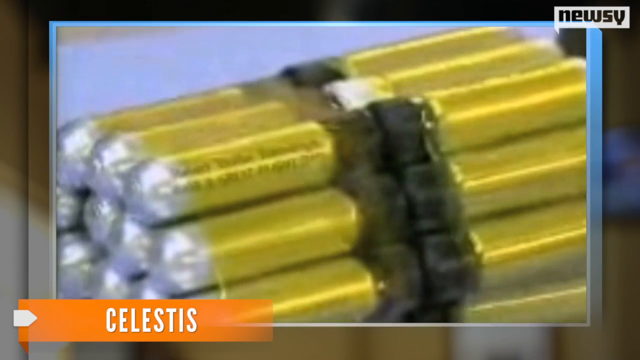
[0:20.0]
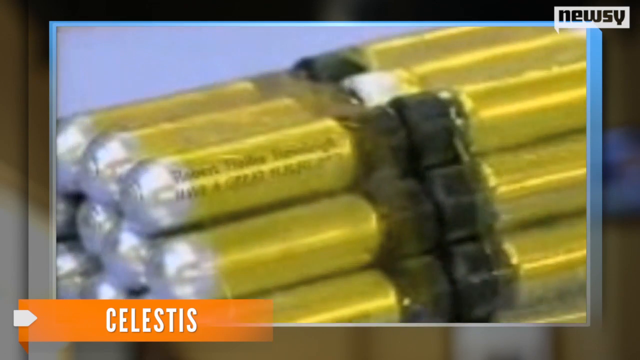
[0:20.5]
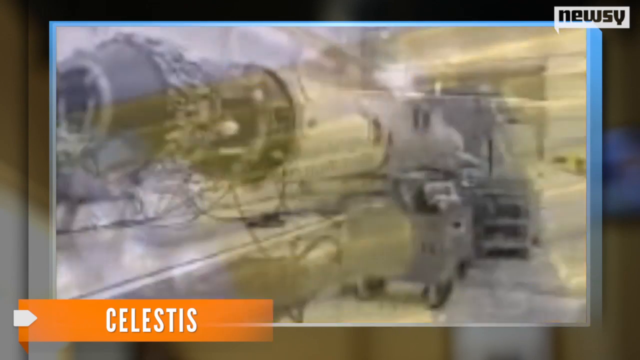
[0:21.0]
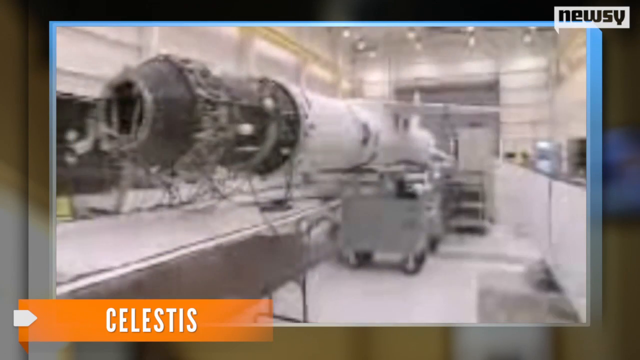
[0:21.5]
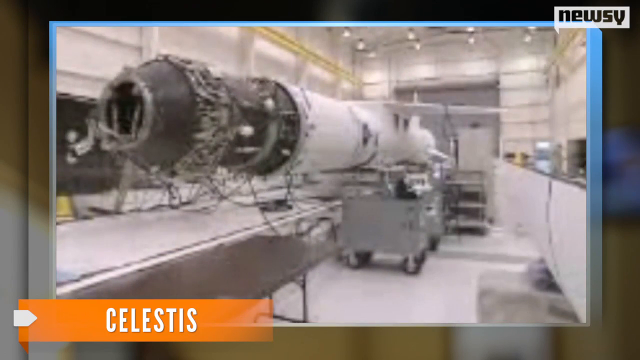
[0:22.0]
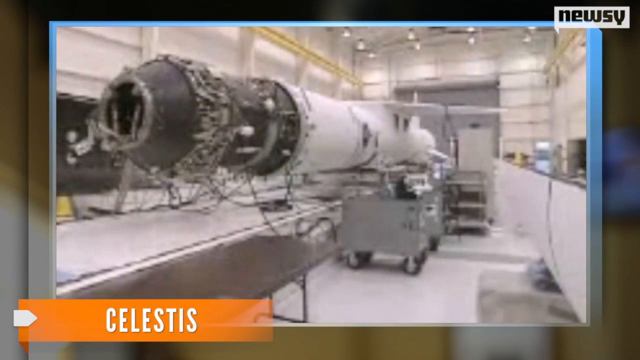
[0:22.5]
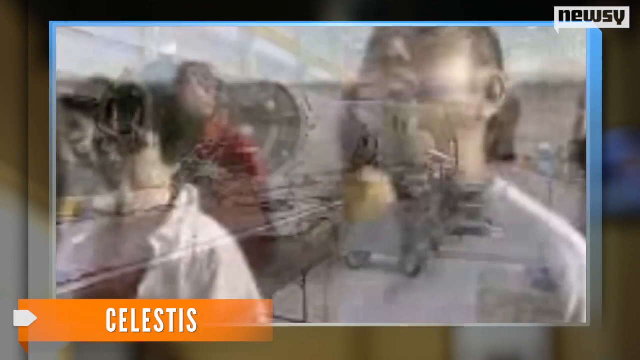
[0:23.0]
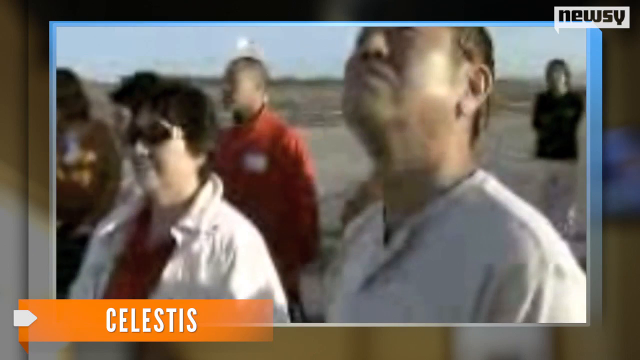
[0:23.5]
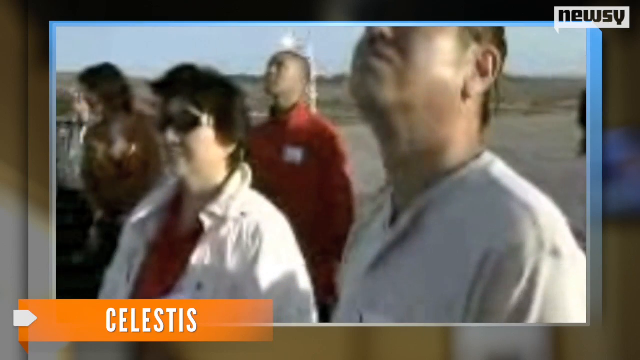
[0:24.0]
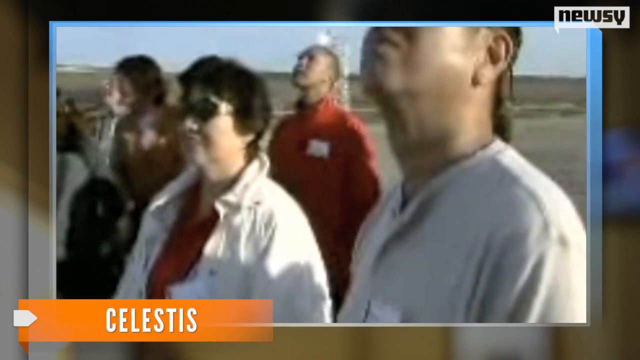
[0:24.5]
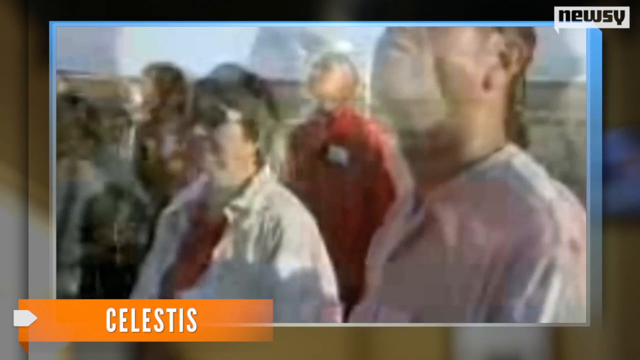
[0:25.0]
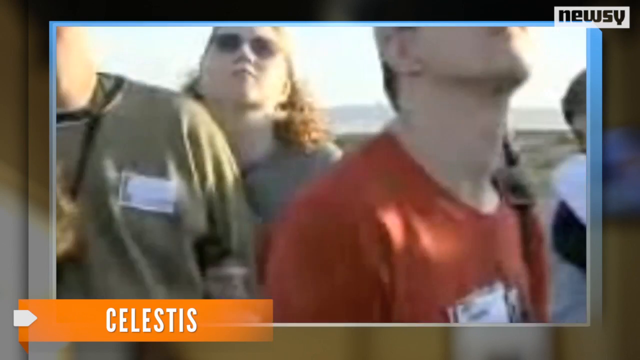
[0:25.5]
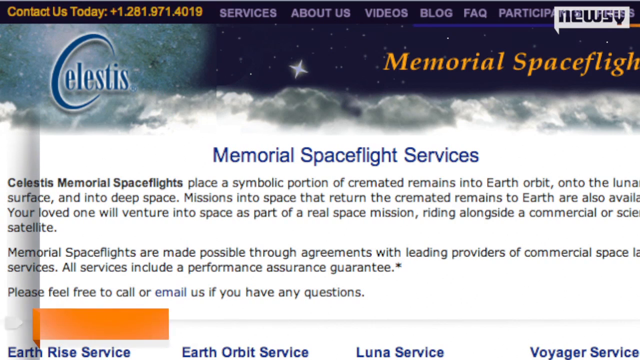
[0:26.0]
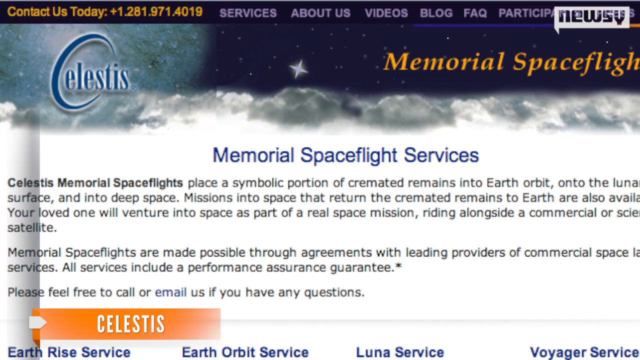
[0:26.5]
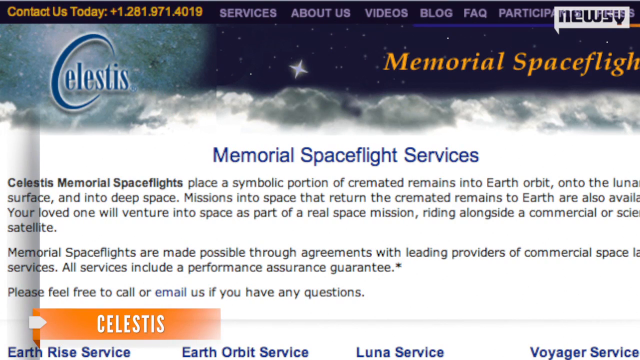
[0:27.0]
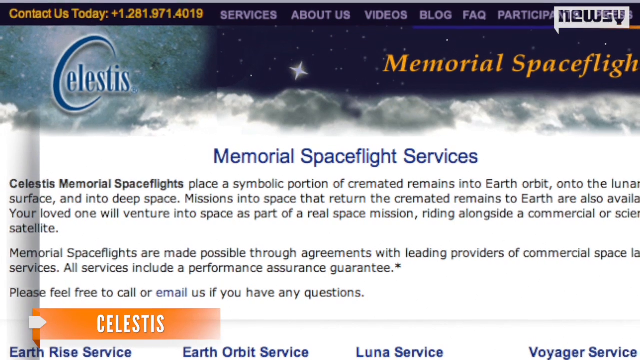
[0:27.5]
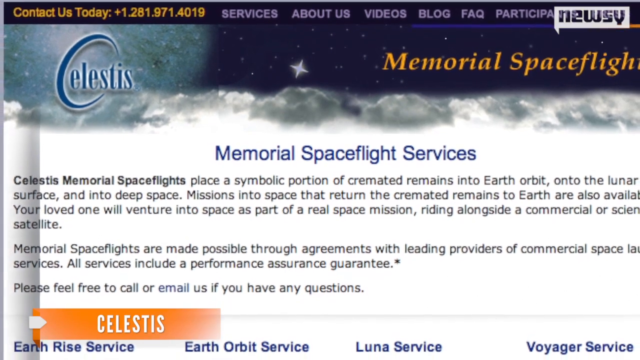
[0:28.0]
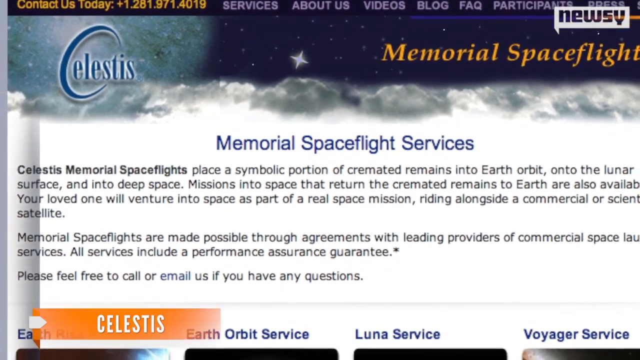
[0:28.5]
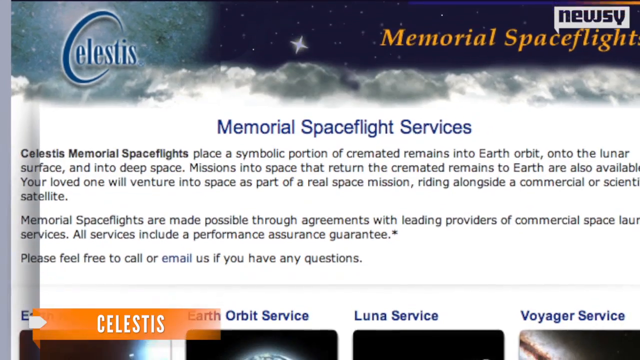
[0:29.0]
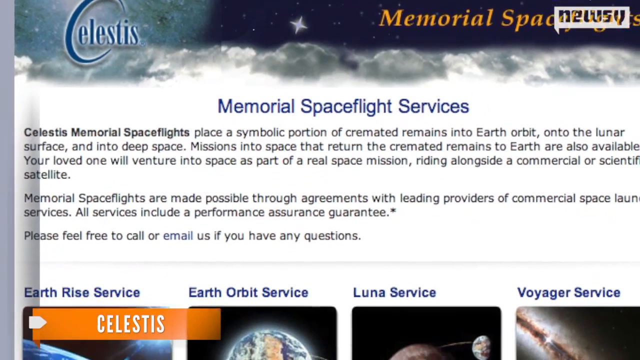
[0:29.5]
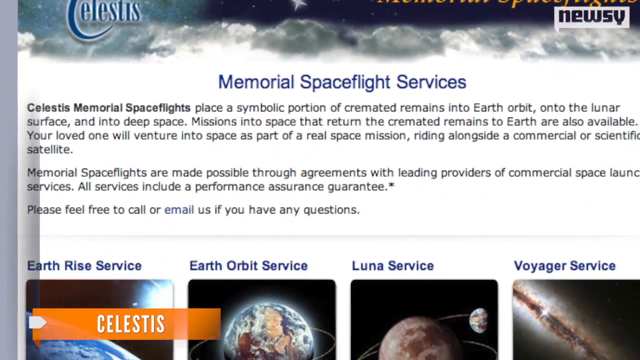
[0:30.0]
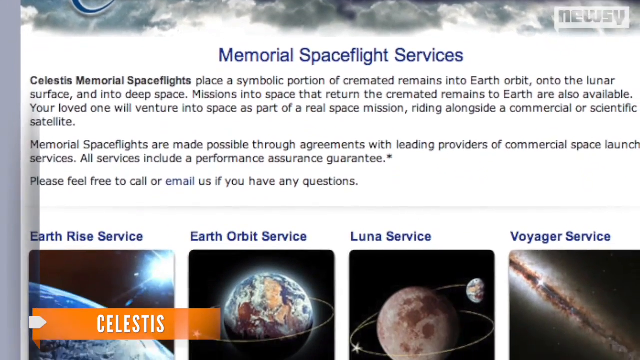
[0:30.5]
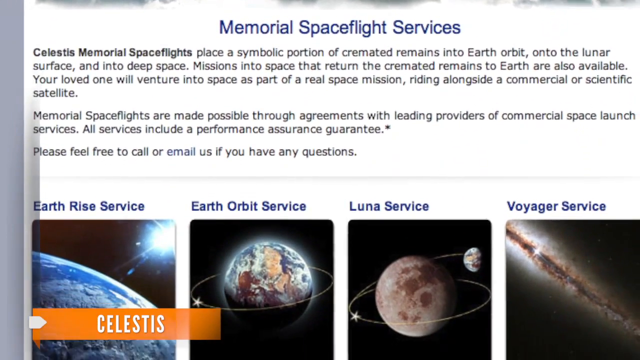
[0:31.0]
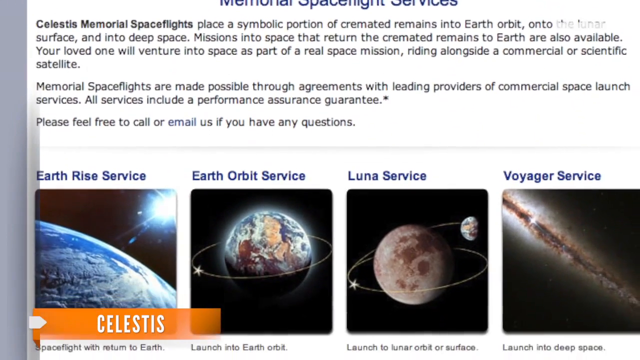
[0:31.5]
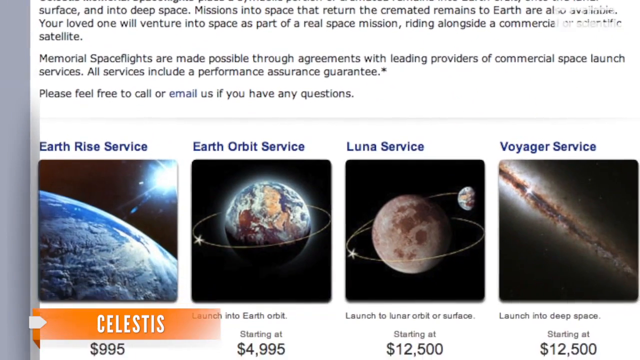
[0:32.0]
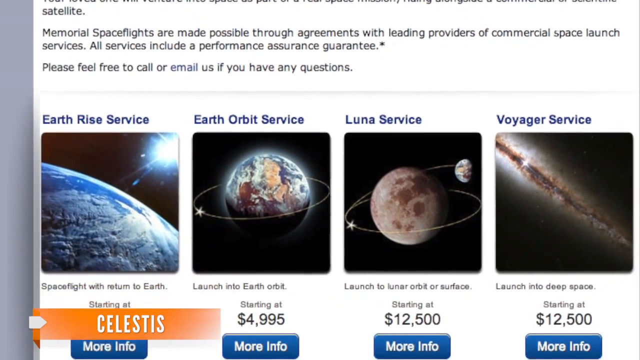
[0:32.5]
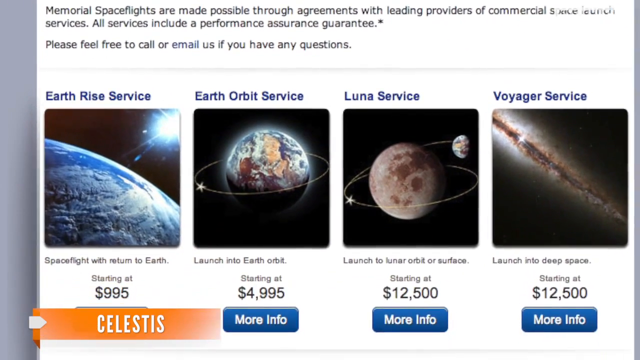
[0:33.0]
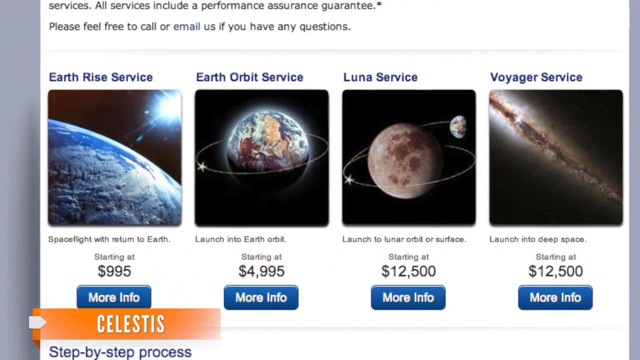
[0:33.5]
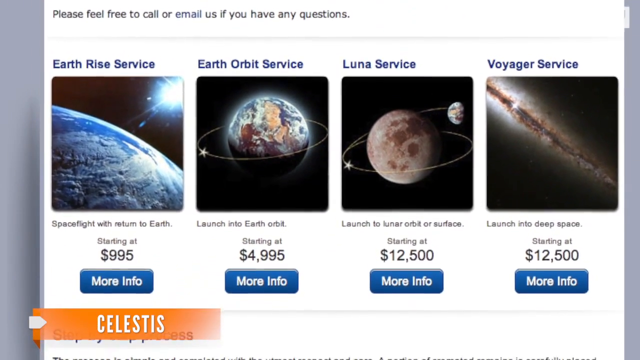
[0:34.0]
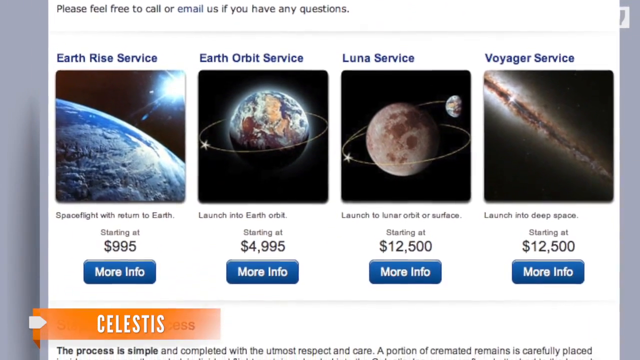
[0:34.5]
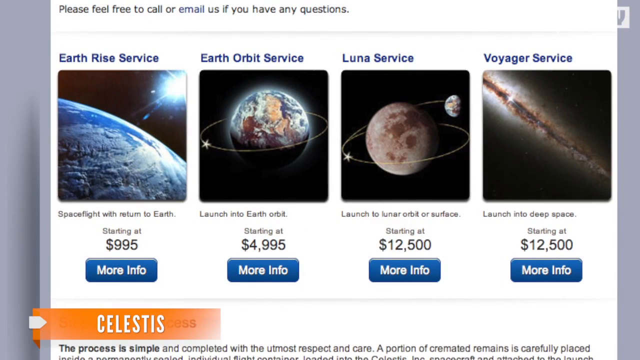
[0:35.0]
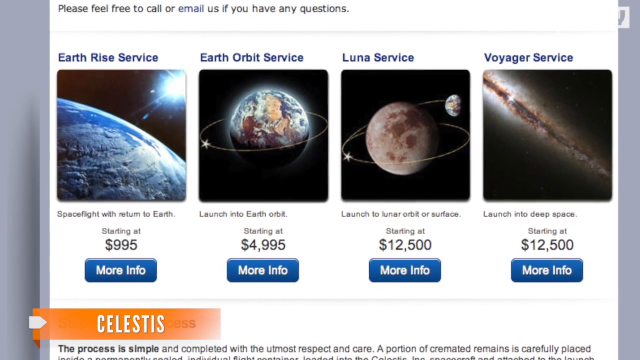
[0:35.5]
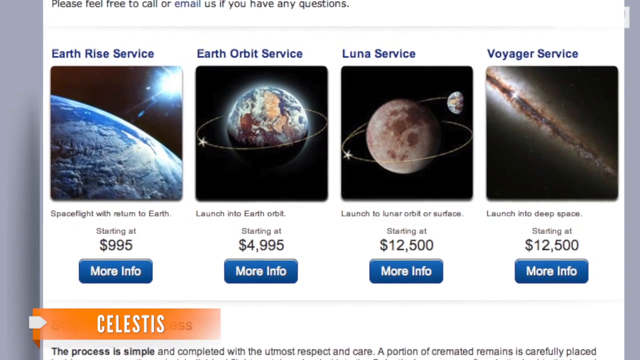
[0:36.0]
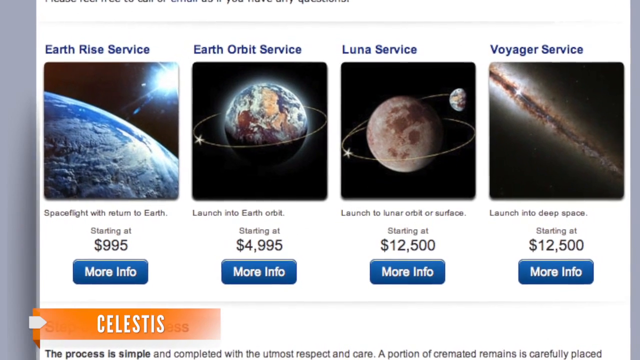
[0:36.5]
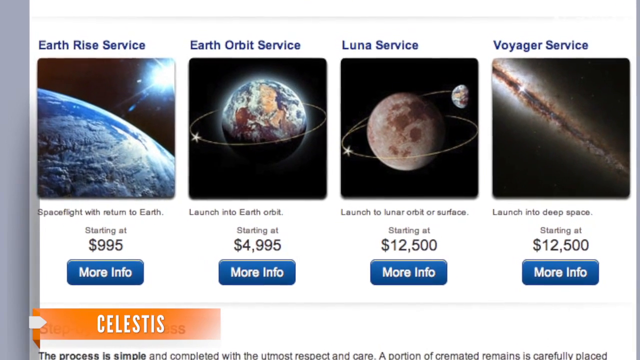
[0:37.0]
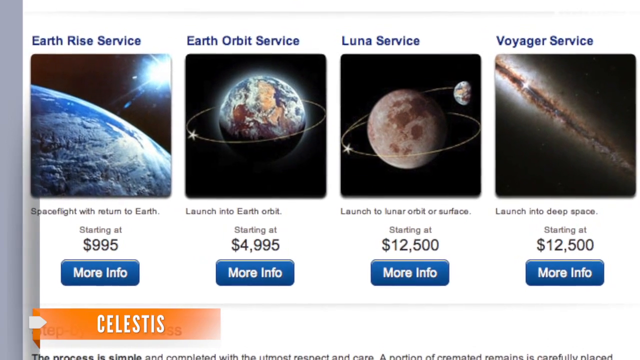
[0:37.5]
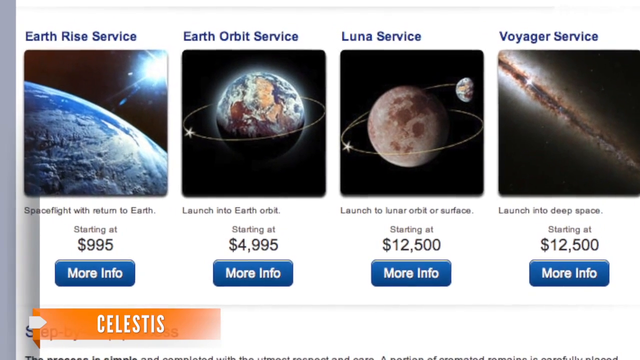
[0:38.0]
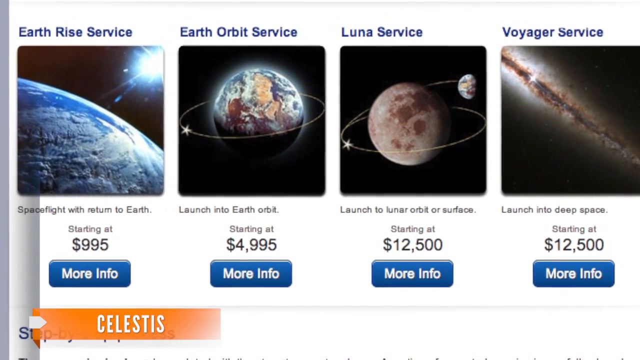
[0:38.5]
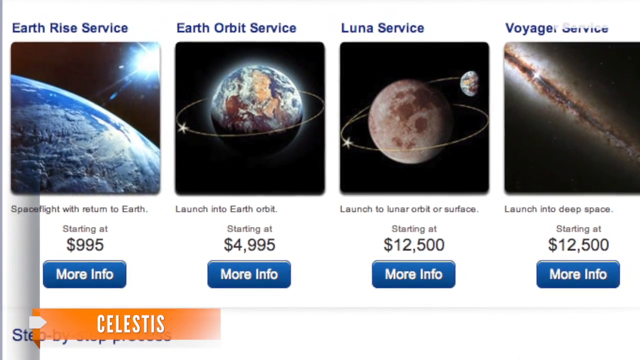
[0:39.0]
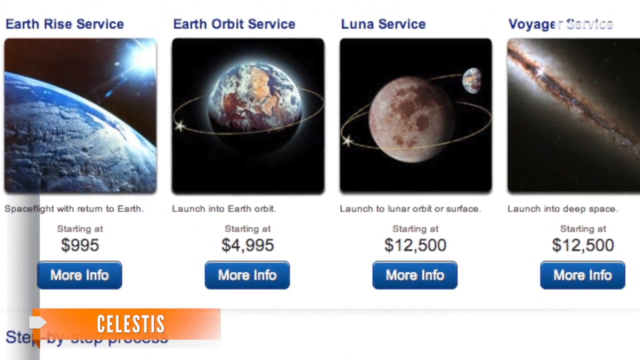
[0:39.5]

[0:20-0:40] The bullet-like objects are shown kept with a golden cover, and then rockets are shown. Outside are Asian people: a woman wearing a white coat with a vest under it is next to a man who is looking up, and another man wears an orange space suit. Memorial spaceflight services are then shown; it seems to be a space funeral in which cremated human remains are placed into space. Different series are shown, including the Lunar series and the Voyager series, along with different prices, including 4995 dollars for an Earth service and 5500 for a lunar service, showing different lunar services for sending the cremated remains of loved ones to space.